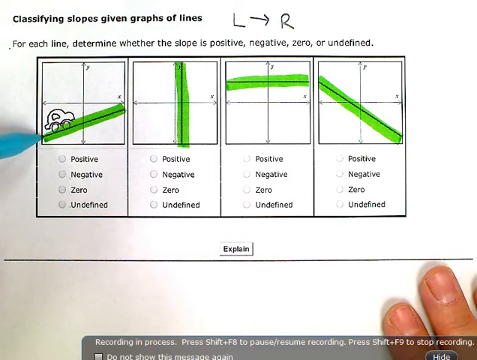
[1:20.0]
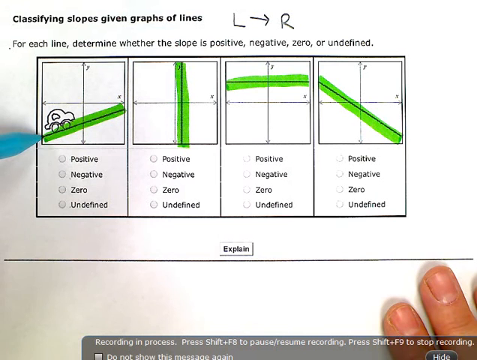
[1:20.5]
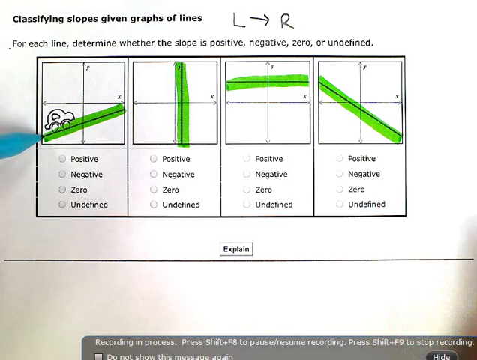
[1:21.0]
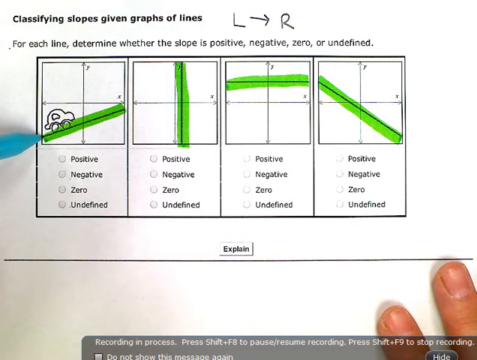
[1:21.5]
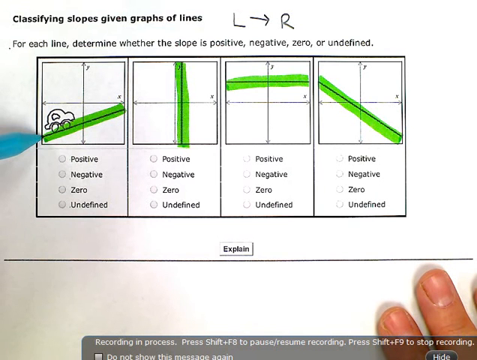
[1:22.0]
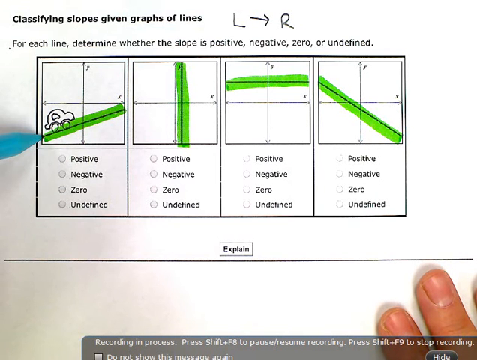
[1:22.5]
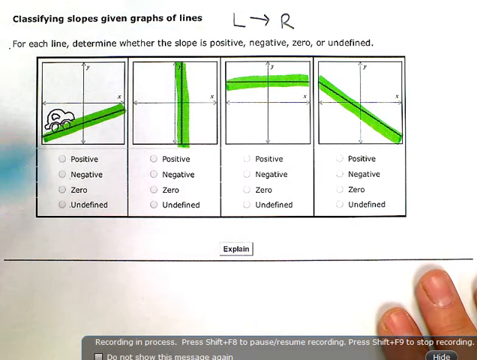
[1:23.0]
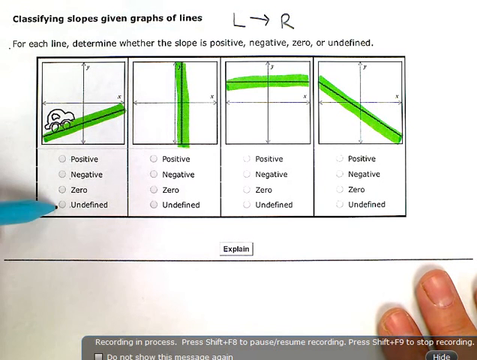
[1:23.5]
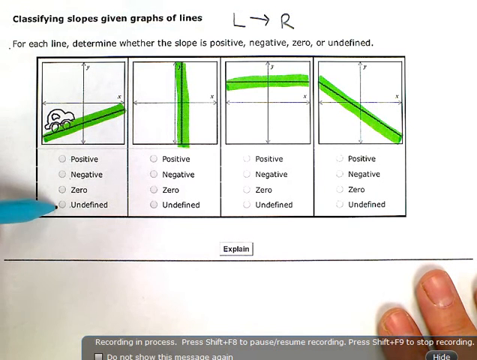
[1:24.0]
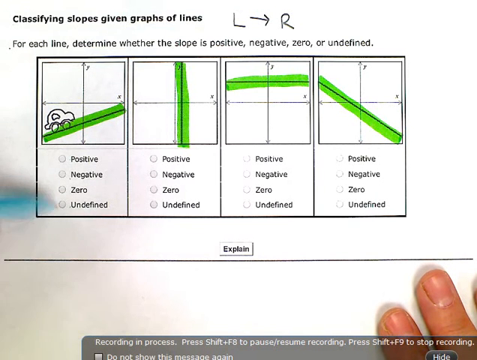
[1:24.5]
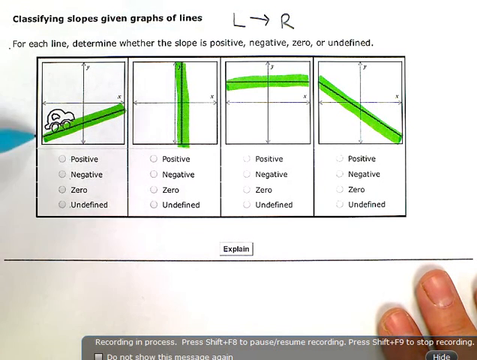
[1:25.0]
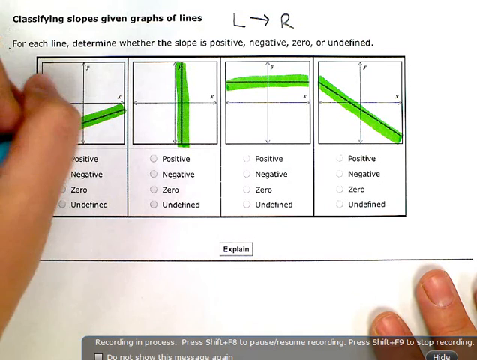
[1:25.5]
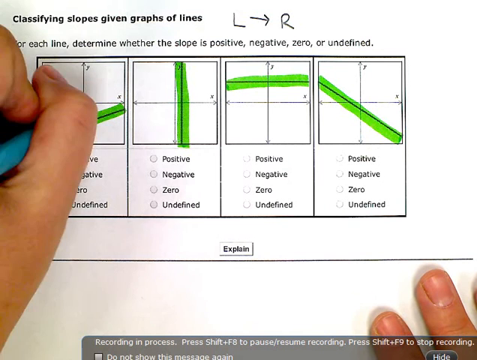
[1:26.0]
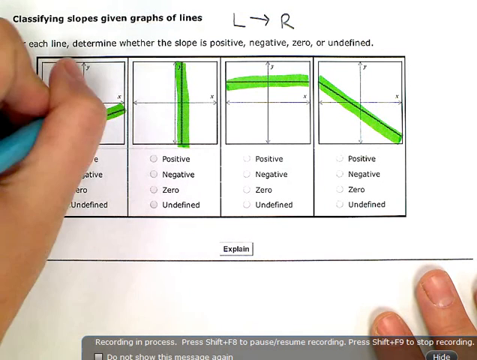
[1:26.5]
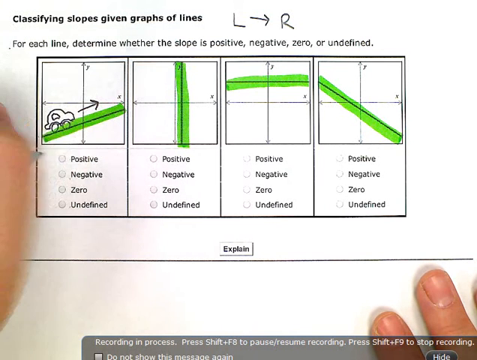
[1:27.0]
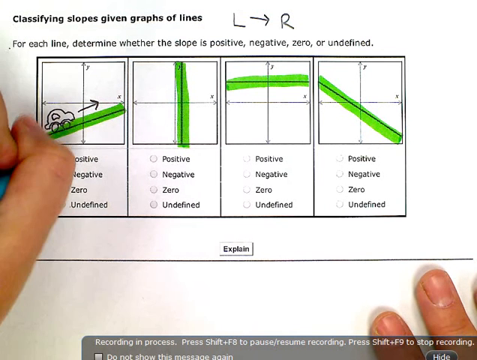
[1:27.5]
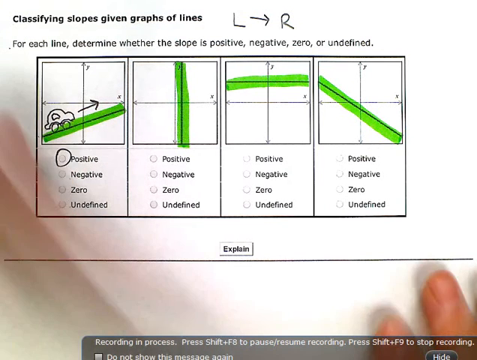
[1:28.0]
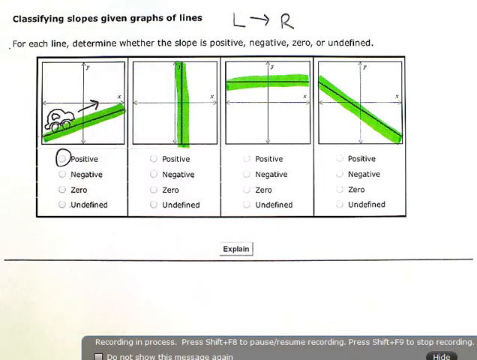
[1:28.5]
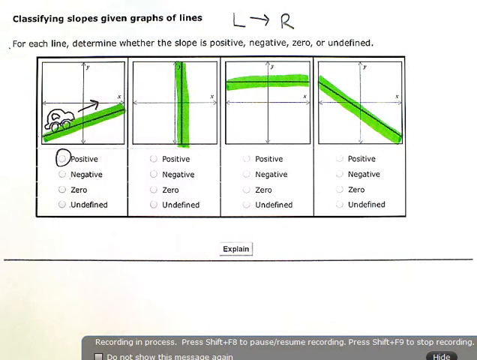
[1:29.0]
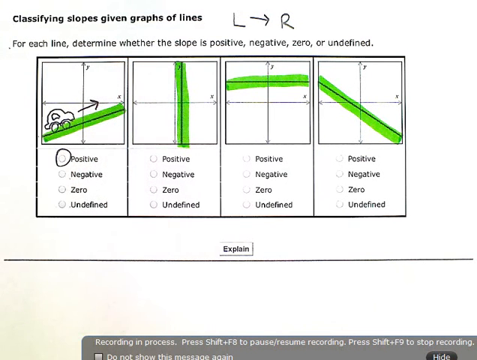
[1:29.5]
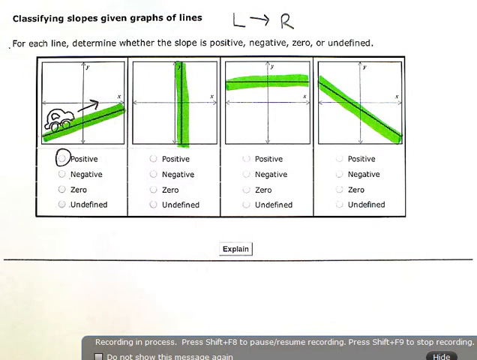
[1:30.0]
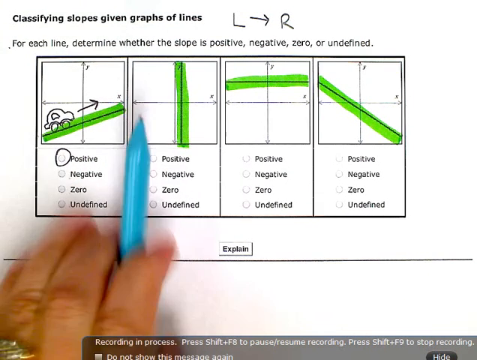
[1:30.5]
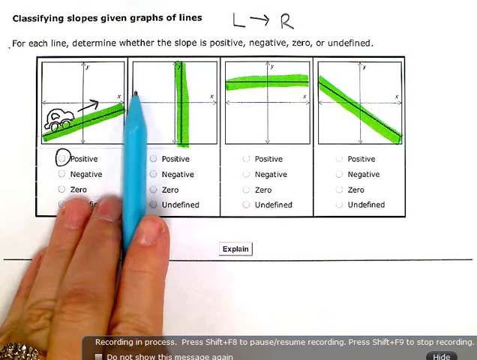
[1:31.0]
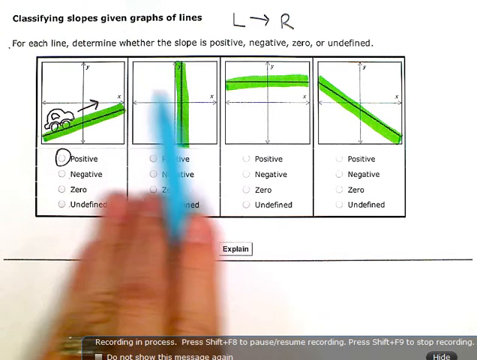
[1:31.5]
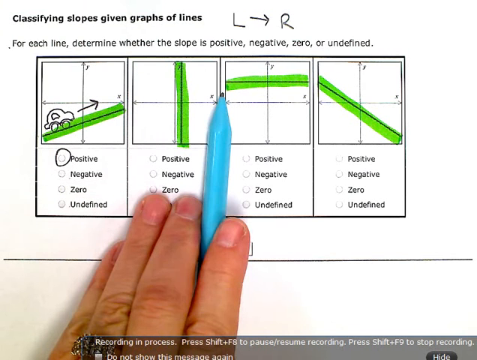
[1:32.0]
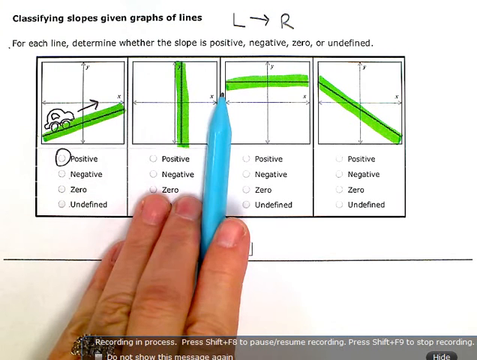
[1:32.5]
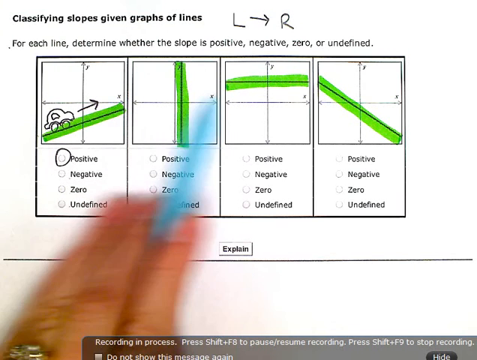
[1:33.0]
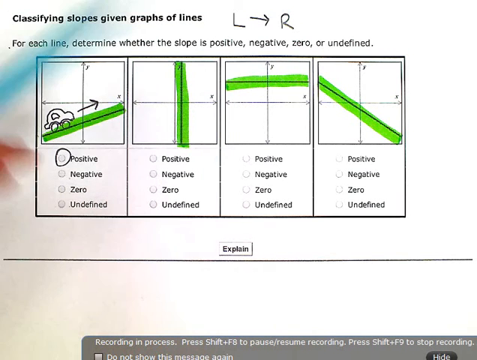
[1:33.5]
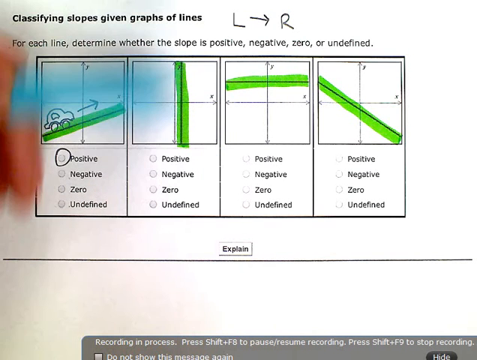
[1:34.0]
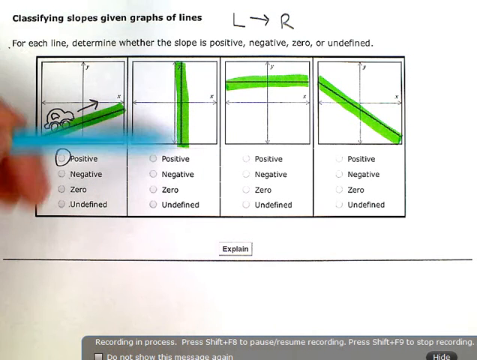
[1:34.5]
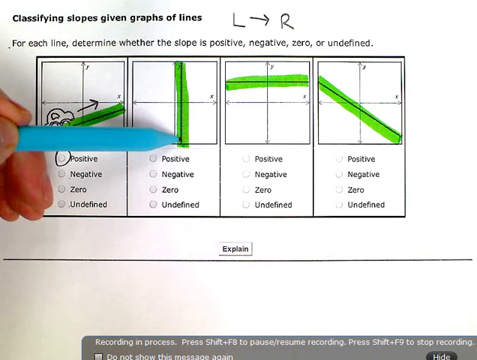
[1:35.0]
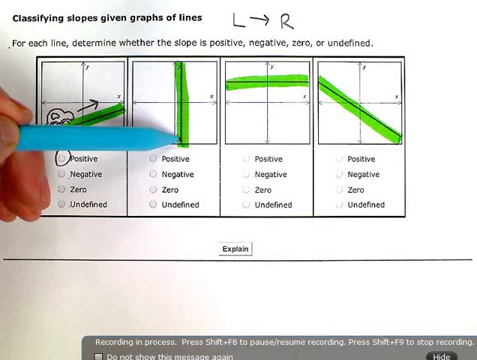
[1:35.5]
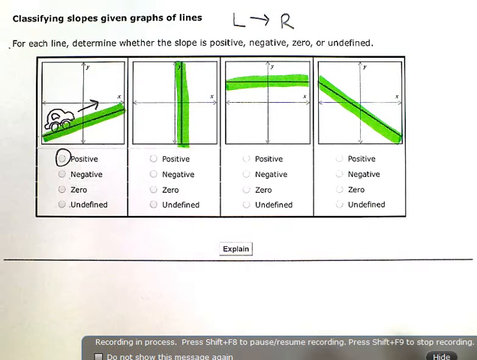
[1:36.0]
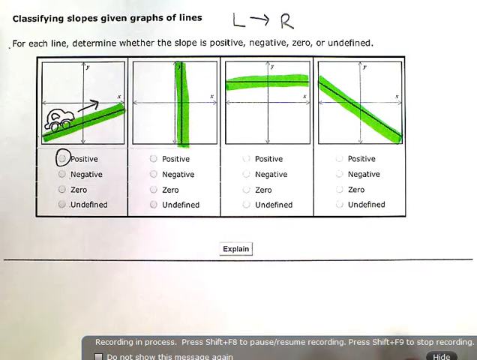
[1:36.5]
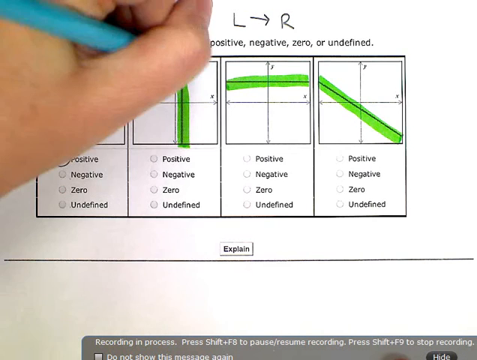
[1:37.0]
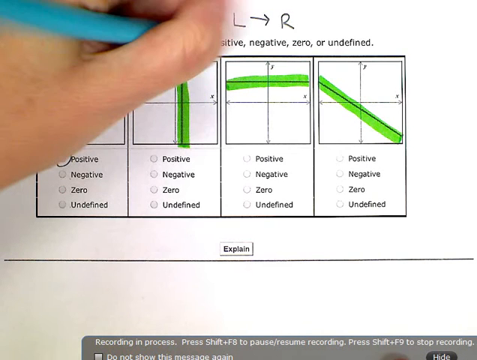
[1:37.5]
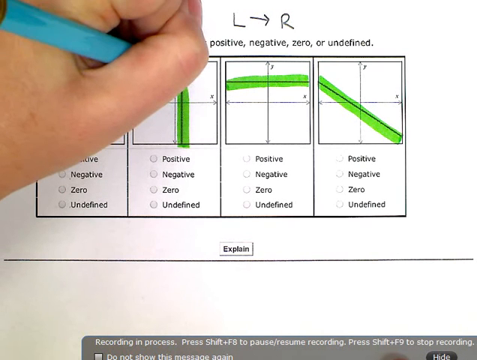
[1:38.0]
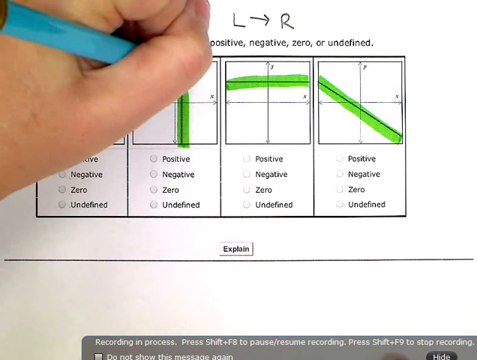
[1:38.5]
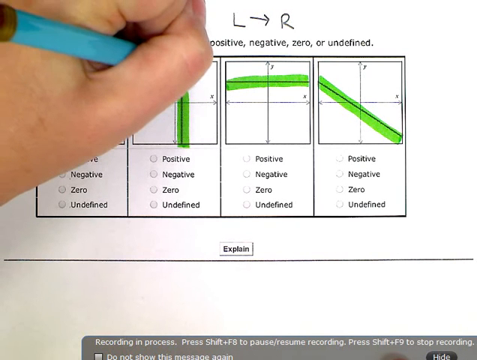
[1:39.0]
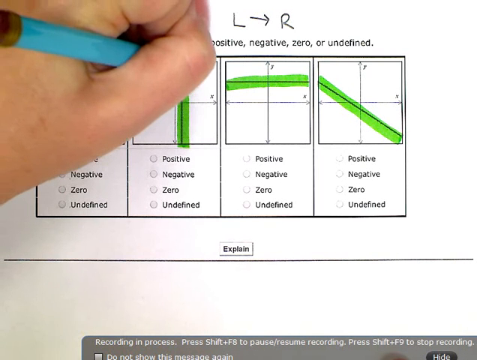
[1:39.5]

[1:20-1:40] The page shows the heading "classifying slopes given graphs of lines" with the words "for each line determine whether the slope is positive, negative, zero or undefined" underneath. Above this is an L with an arrow pointing to the right and a capital R. Below the writing is a rectangular box divided into four equal sections, each with a line highlighted in green highlighter and the words positive, negative, zero or undefined with an area where the matching one can be ticked. A child's hand holds a bright blue pencil, with two of the child's fingers leaning in the bottom right corner of the screen. The child draws on the left side, has drawn a little car and an arrow pointing up in the first box, and has circled the positive answer.